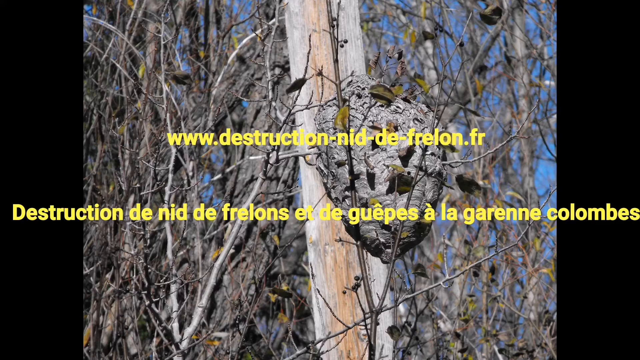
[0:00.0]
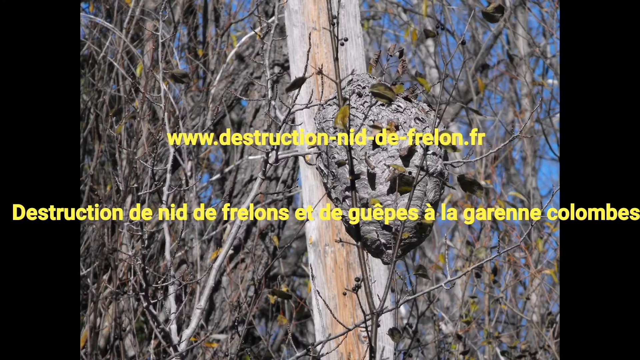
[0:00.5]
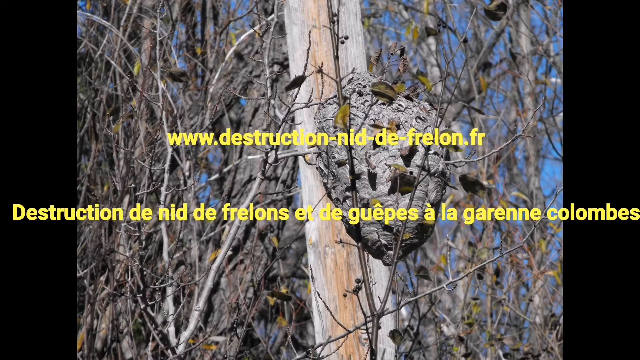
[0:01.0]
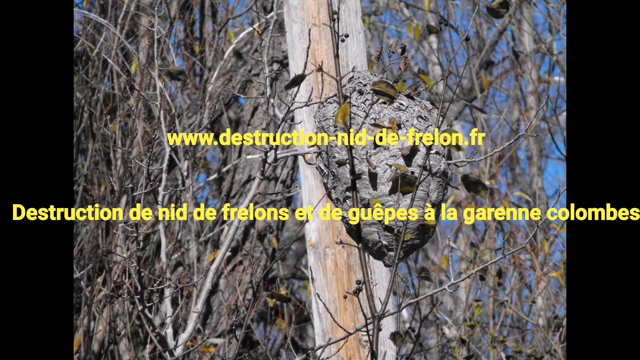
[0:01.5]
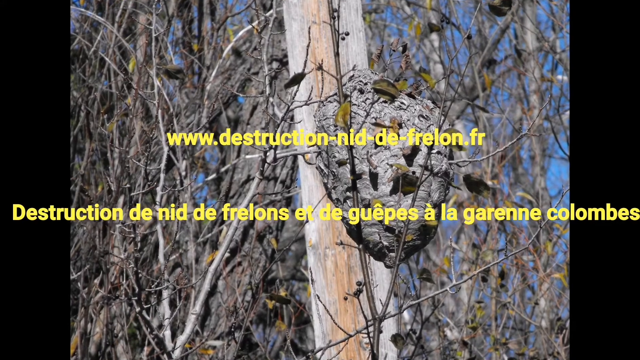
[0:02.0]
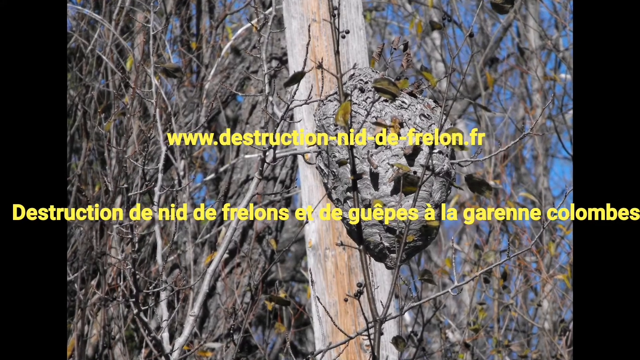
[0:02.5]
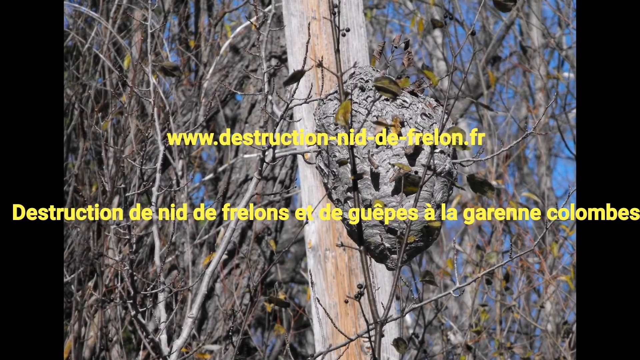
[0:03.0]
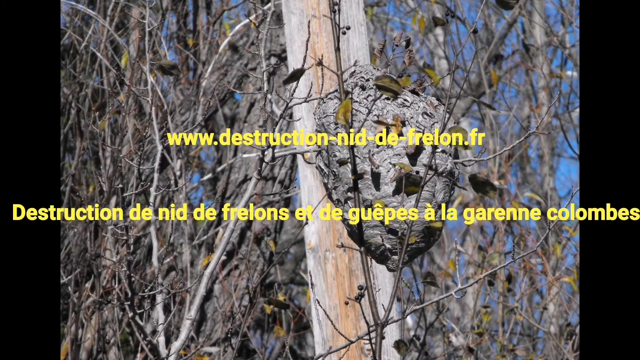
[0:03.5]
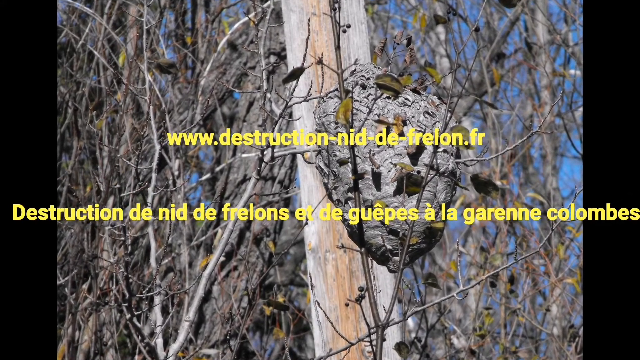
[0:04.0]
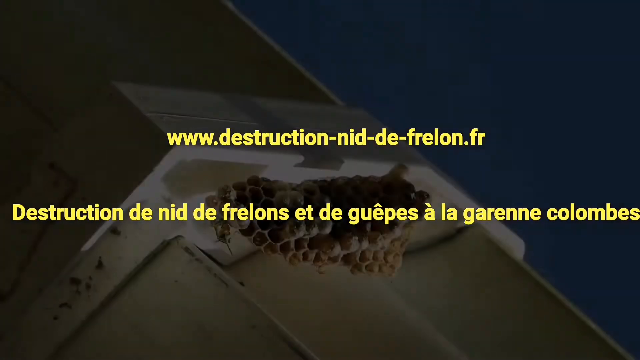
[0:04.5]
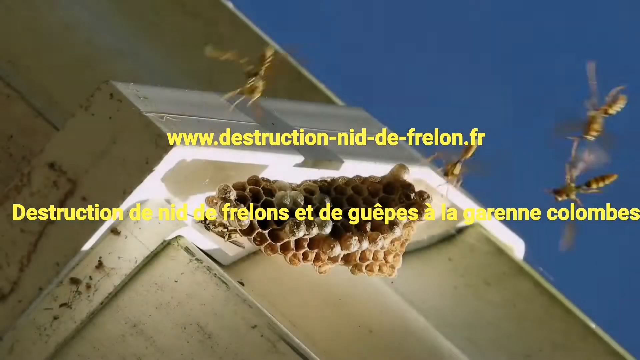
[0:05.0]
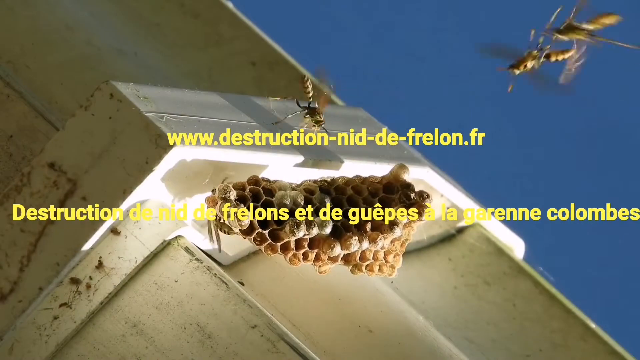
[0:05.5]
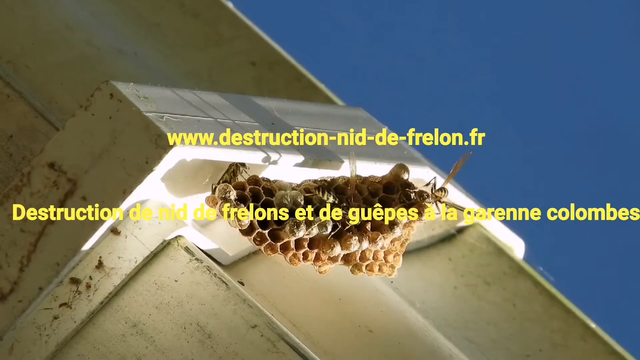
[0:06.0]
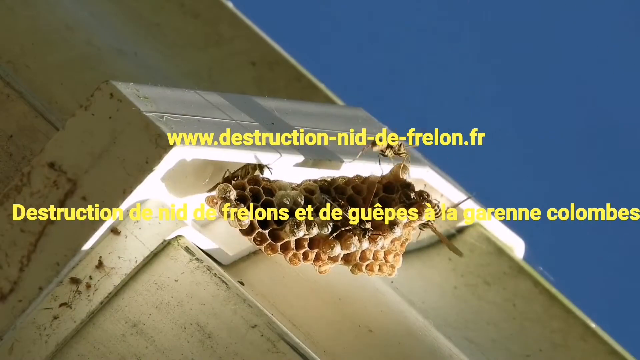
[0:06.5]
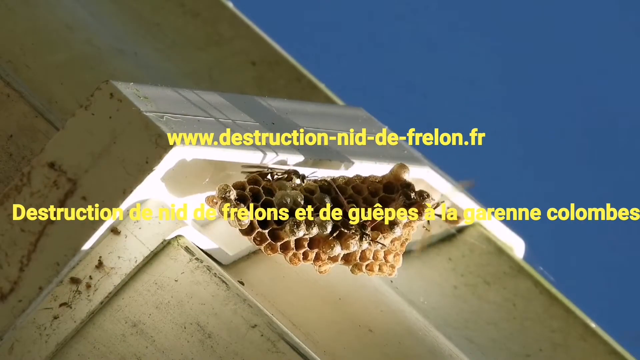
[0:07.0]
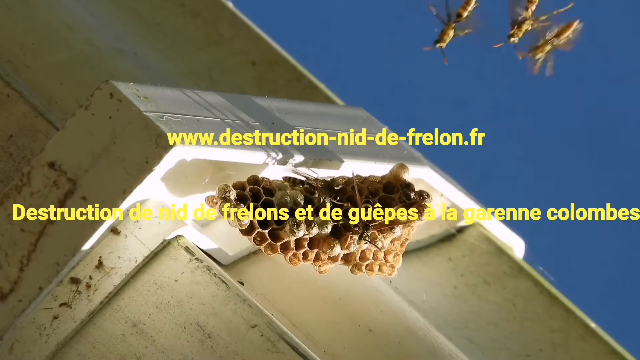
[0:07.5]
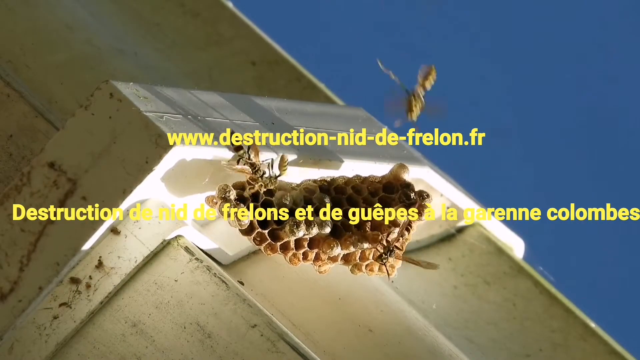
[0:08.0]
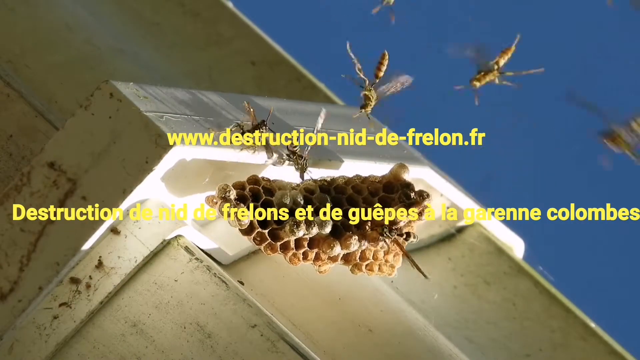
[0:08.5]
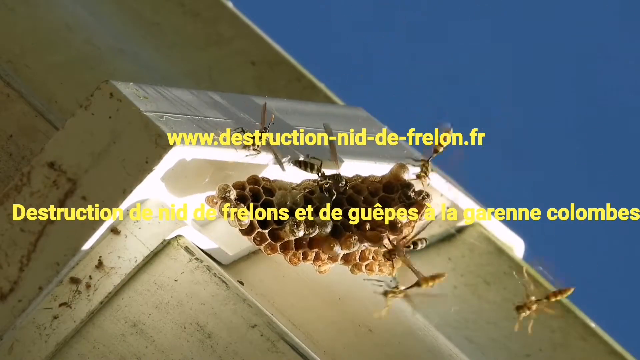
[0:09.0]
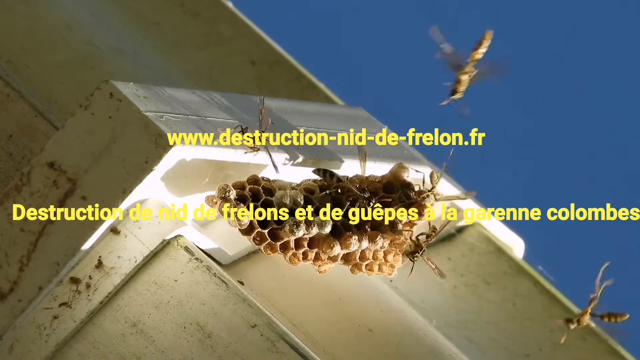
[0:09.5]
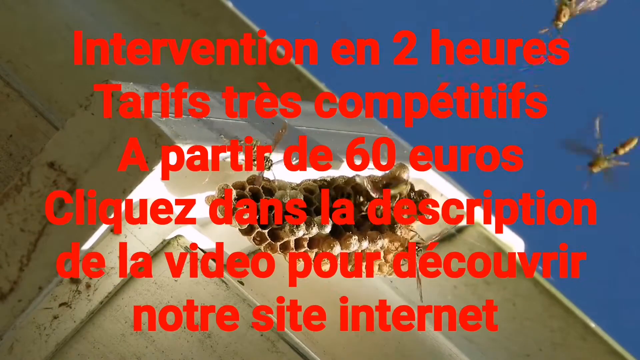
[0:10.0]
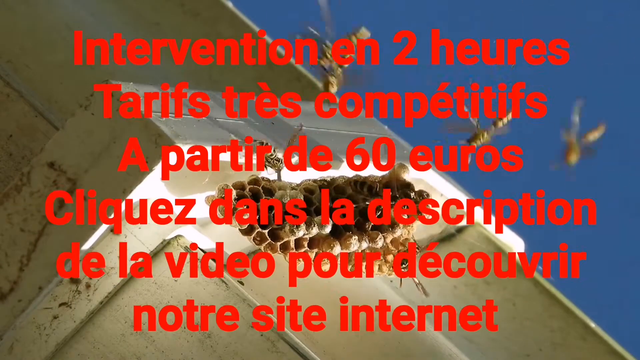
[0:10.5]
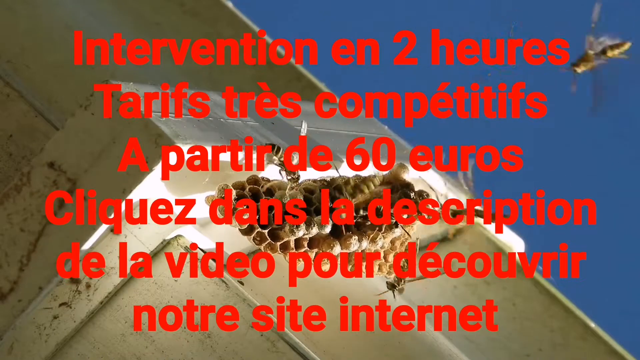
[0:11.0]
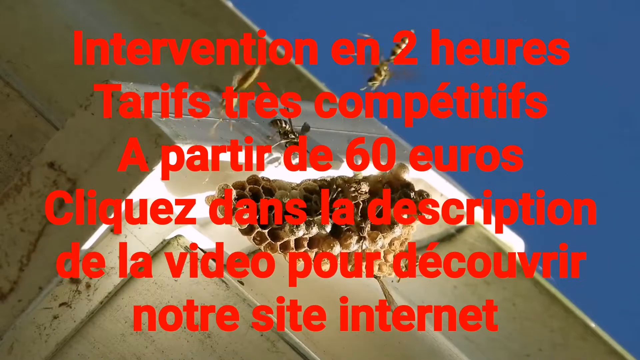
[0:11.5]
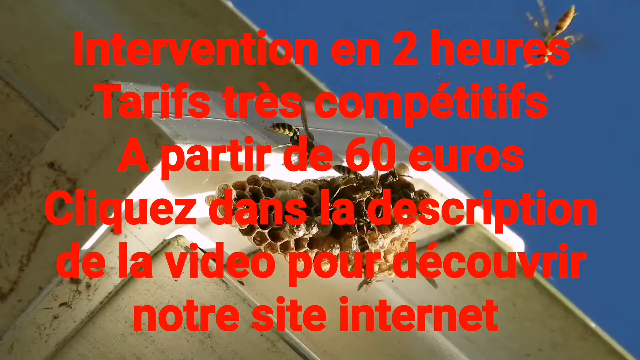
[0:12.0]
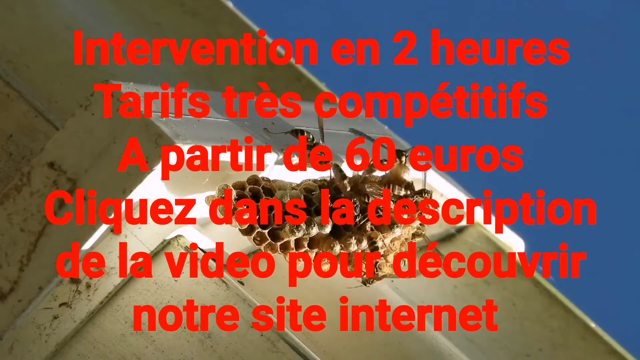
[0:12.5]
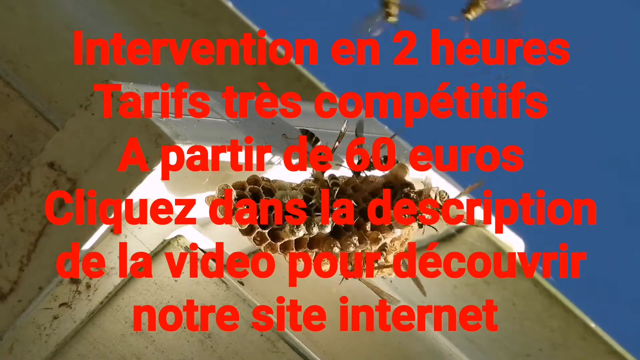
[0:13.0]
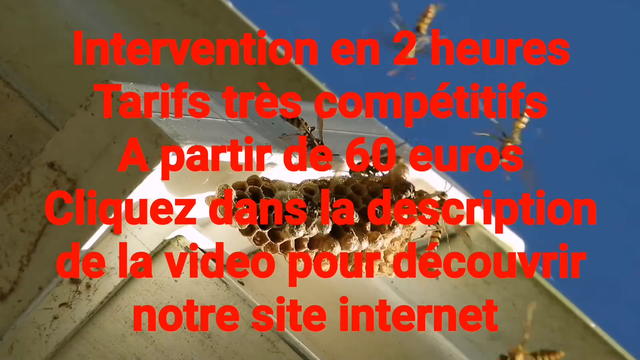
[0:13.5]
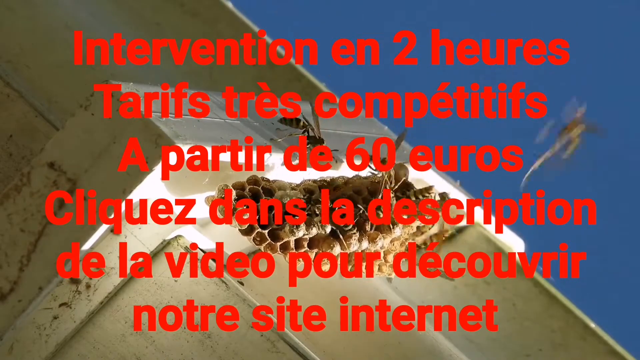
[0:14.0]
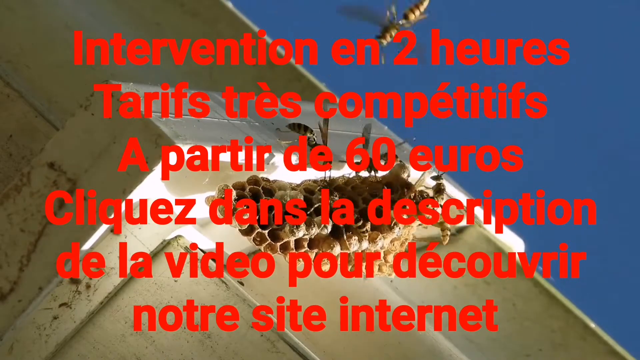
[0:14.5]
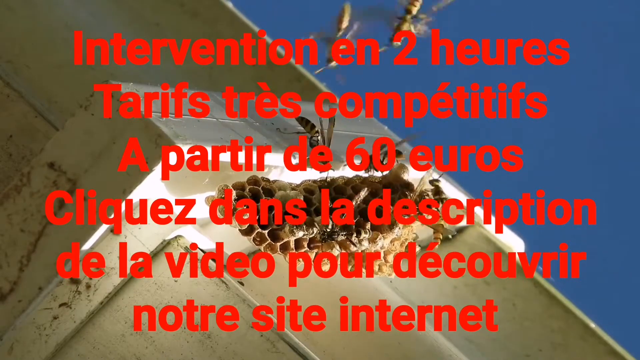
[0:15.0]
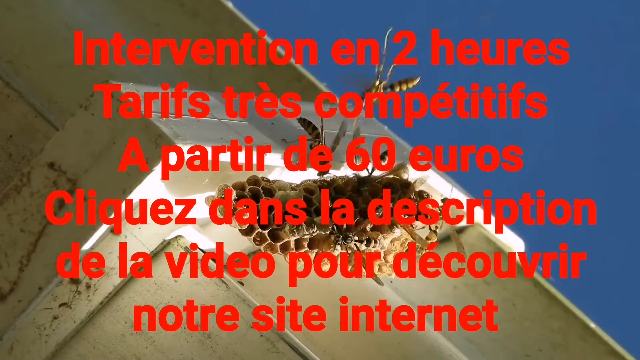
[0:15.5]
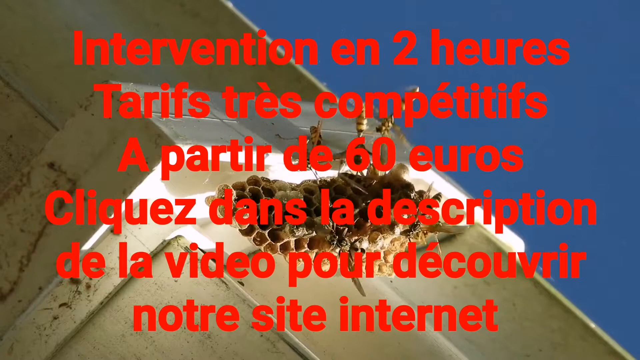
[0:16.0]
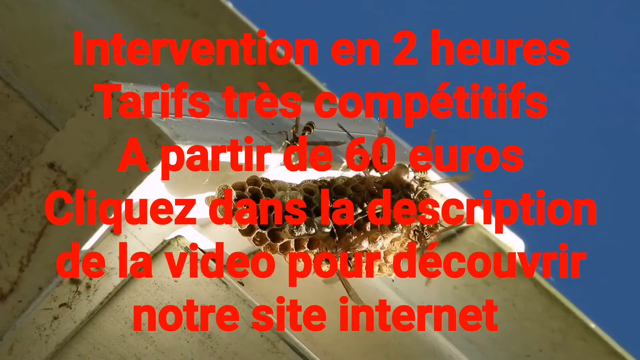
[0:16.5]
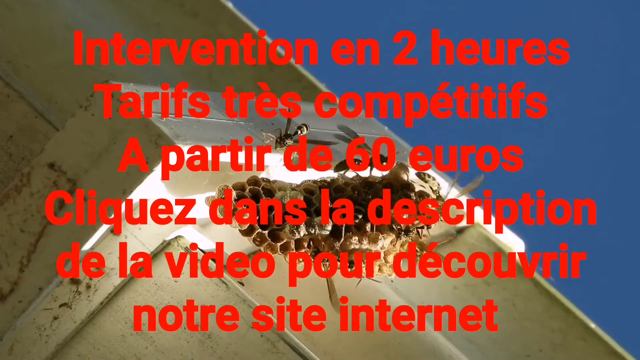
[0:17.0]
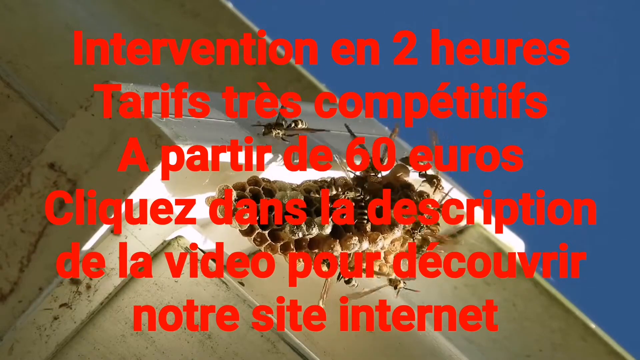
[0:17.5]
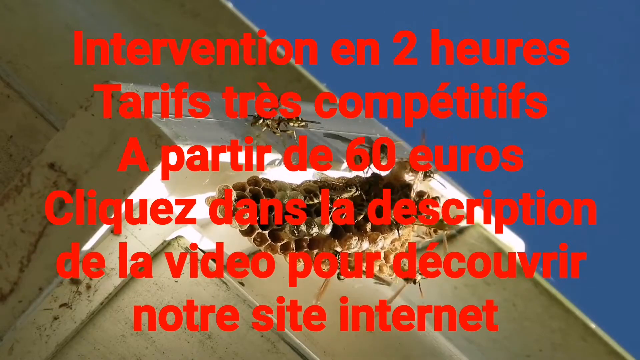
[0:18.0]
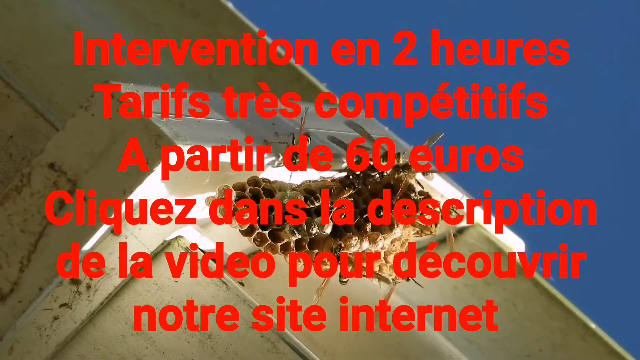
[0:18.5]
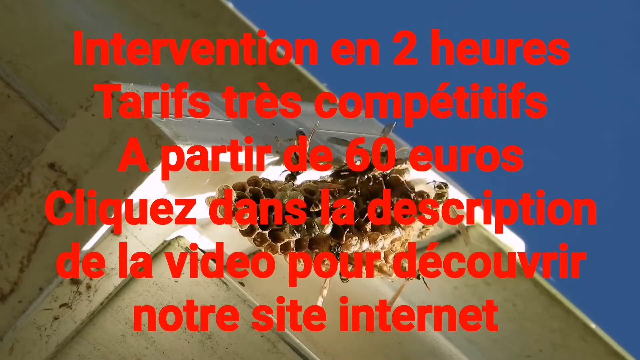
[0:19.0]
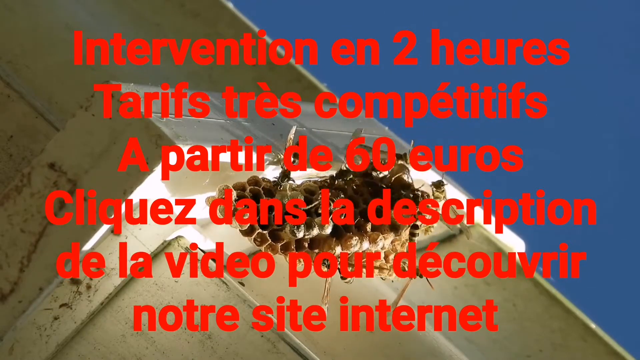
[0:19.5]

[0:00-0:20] A close-up view shows what looks like a hive for wasps or hornets in an animal documentary video, with words written in yellow in a foreign language other than English. The nest is attached to the side of a building, and lots of hornets or wasps fly around it. Next, text in red describing what is going on appears across the front of the video; it looks like French. The hornets continue their activity as the red text is displayed. They have long bodies striped in black and yellow, and long transparent wings. About 20 or more hornets buzz around the nest, apparently busy building it or performing some other activities.